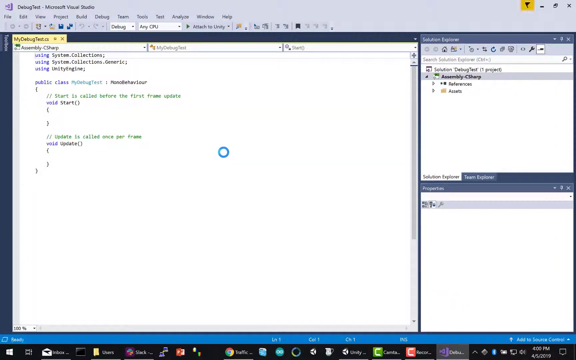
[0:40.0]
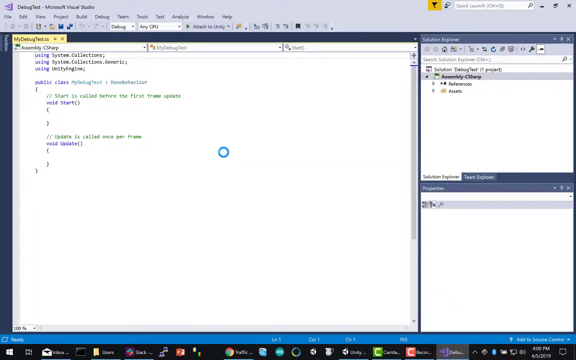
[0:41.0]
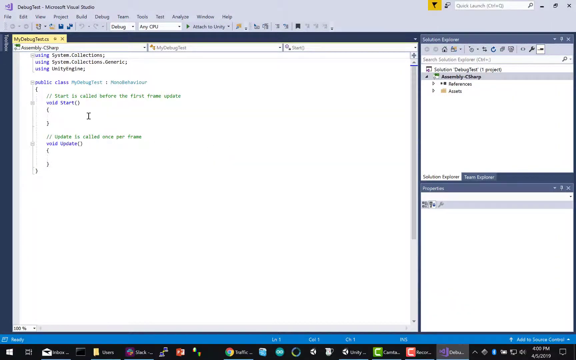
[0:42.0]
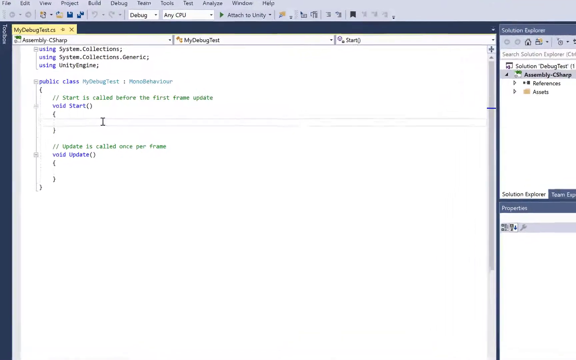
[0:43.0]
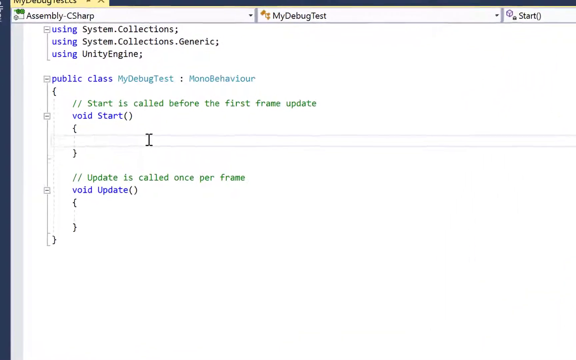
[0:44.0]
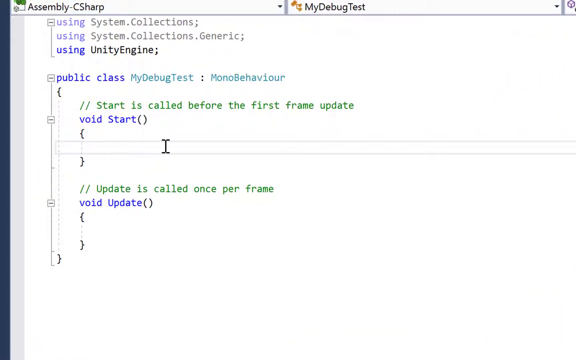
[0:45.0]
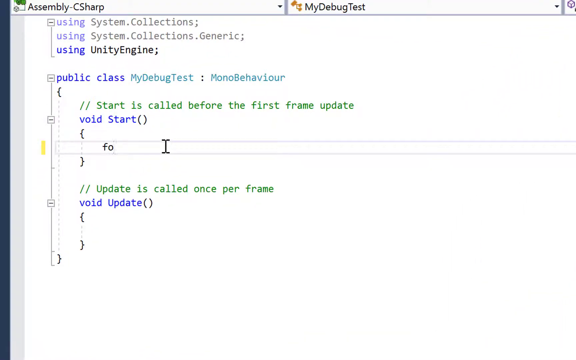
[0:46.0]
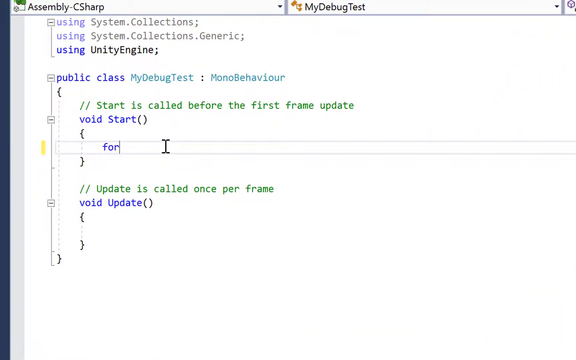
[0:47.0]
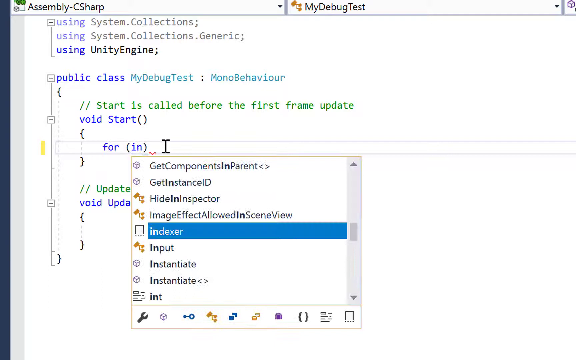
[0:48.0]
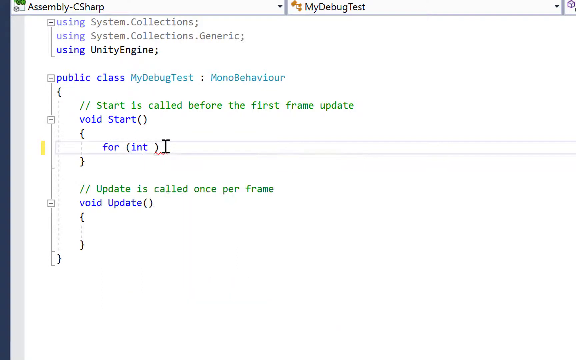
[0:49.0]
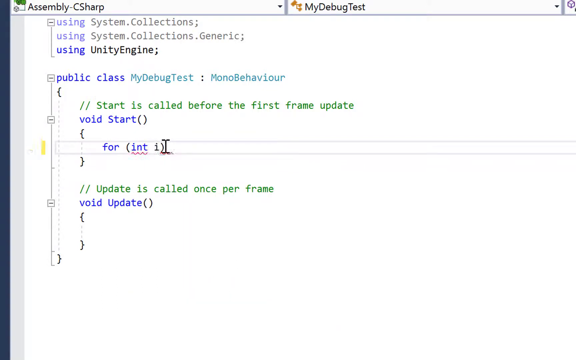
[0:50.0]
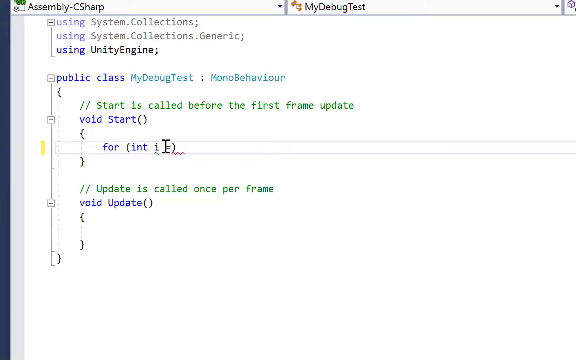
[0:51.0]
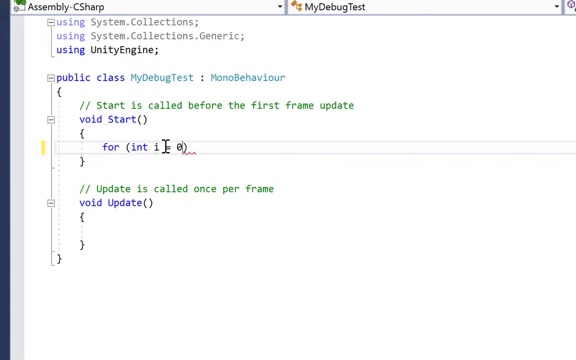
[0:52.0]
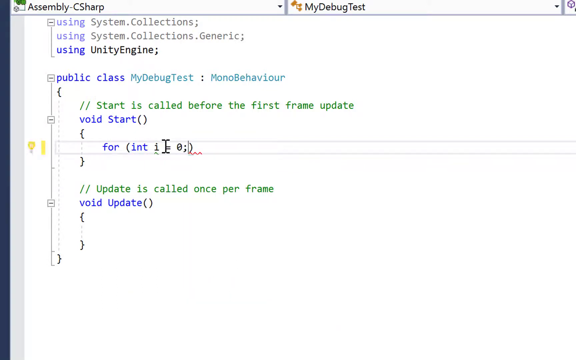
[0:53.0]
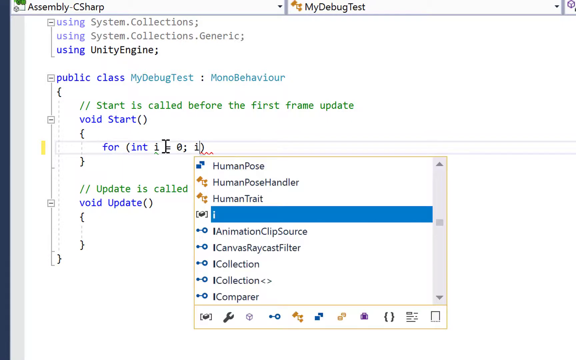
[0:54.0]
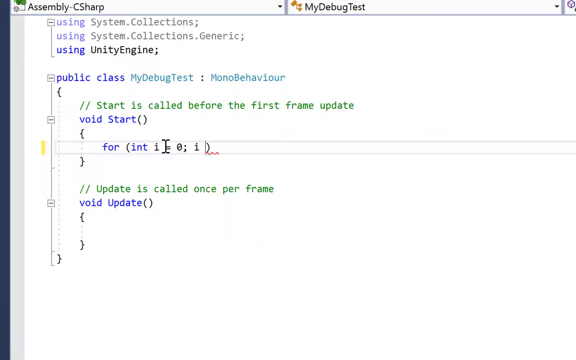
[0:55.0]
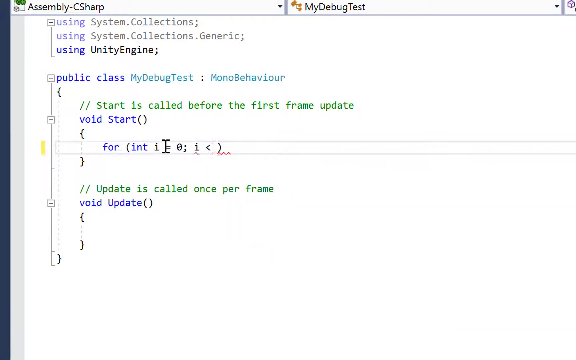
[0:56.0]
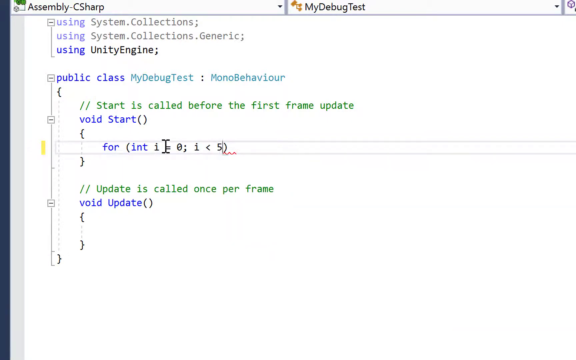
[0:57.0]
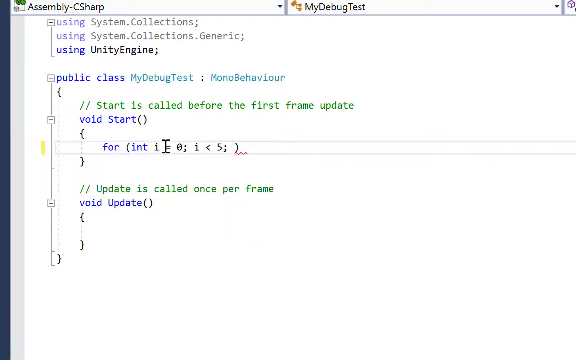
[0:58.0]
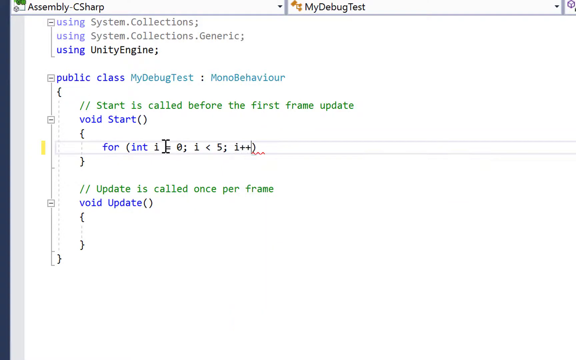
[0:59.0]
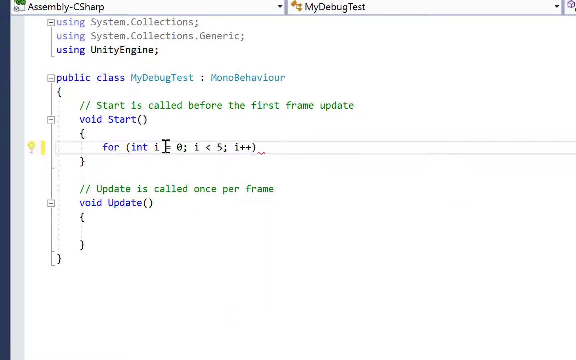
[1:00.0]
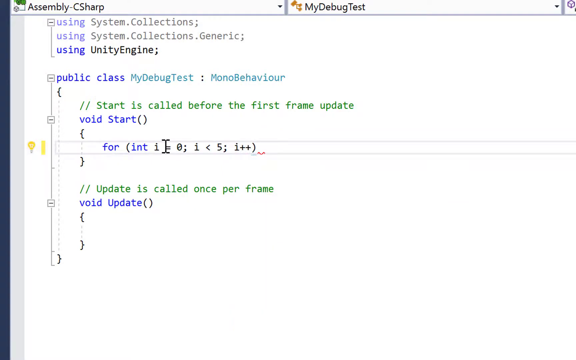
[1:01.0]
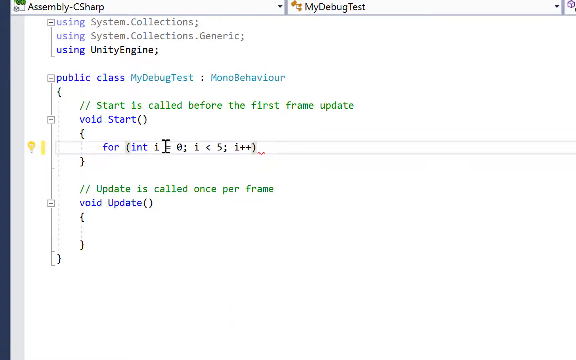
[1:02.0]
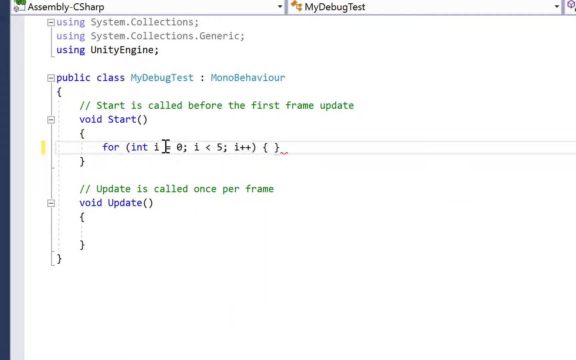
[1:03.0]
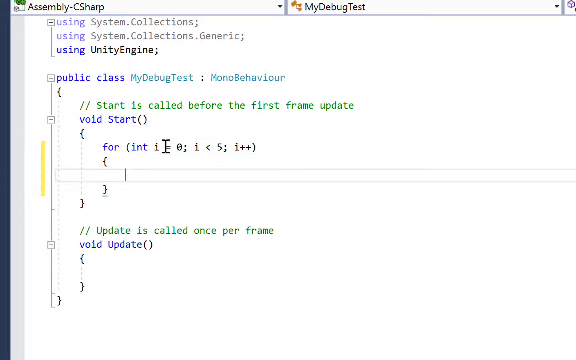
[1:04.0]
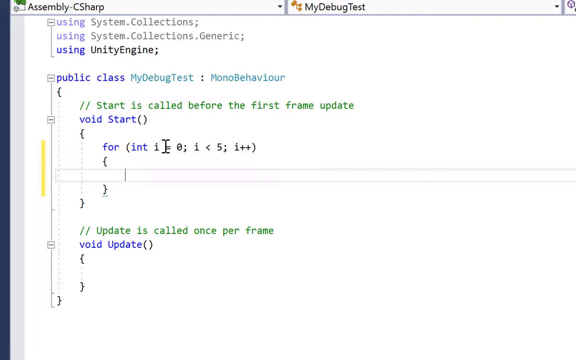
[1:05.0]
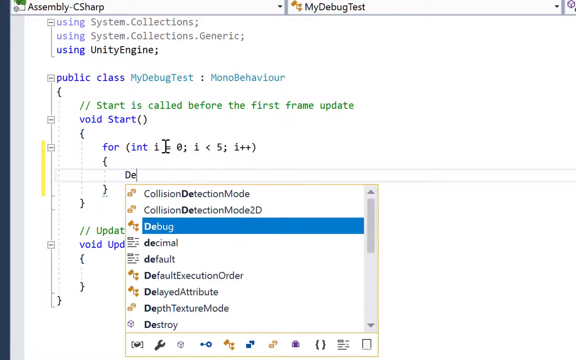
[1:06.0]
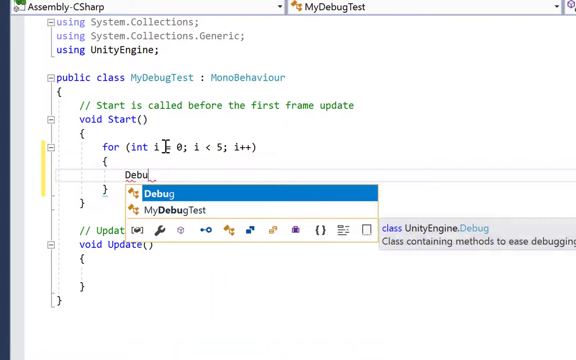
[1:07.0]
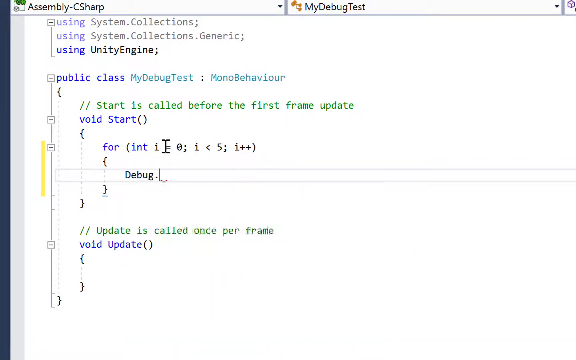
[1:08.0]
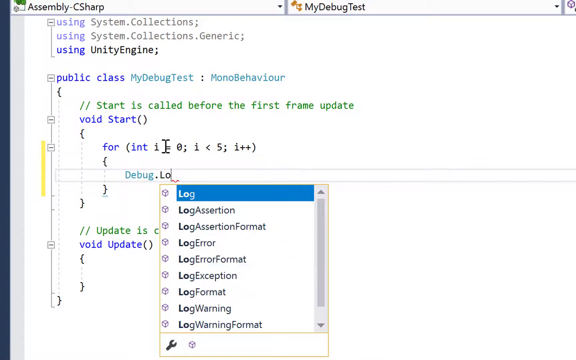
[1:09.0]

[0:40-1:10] The view zooms in and goes to a setting under "my debug test", Mono Behaviour. Text is typed out that seems to be something like a Python setting, and debug and logging information appears a lot as the settings are inserted. Everything seems to be on a completely different page. Another screen is visible on the side, but it is not zoomed in enough to make out what is being done there. The main screen seems to be on the left, as the focus is more on that side than on the right.